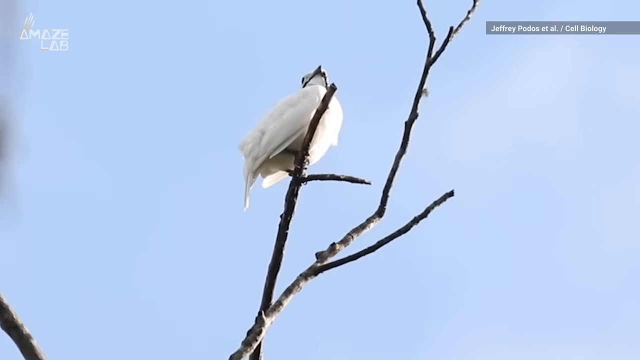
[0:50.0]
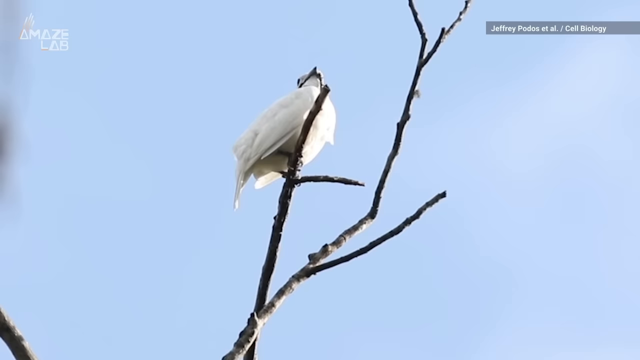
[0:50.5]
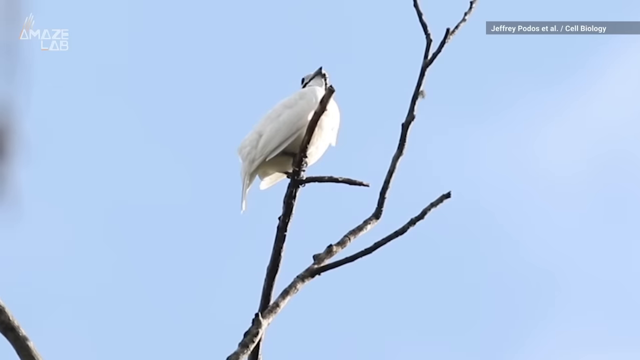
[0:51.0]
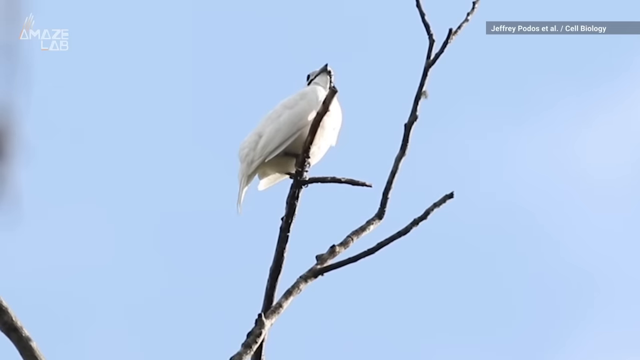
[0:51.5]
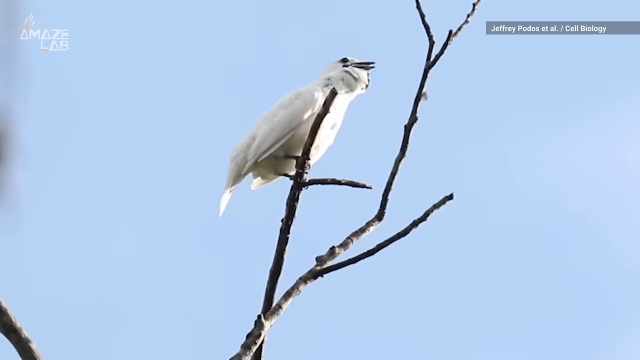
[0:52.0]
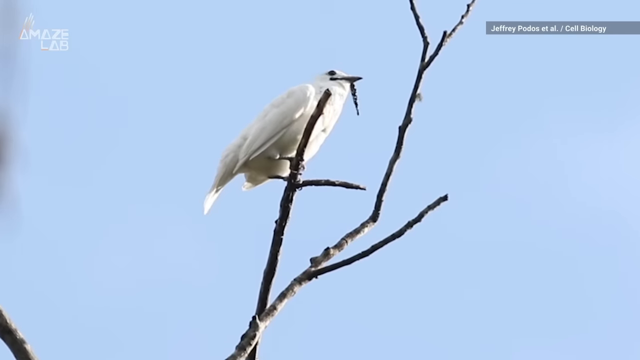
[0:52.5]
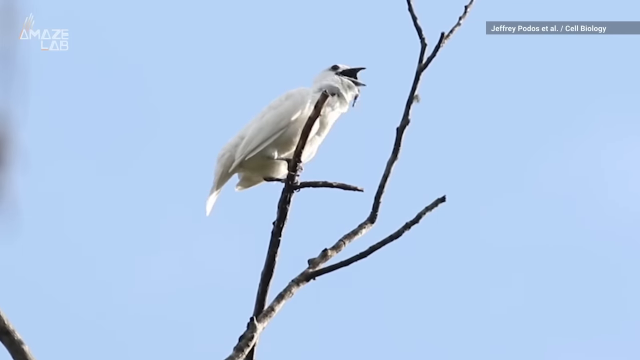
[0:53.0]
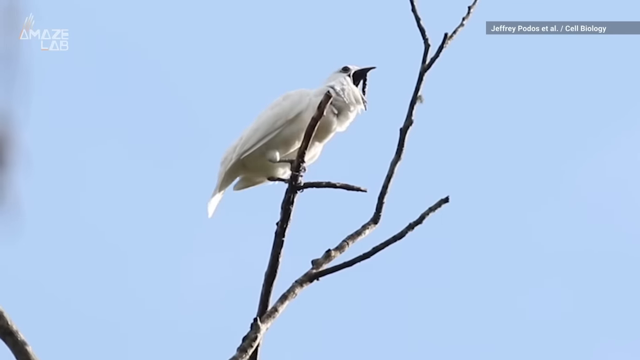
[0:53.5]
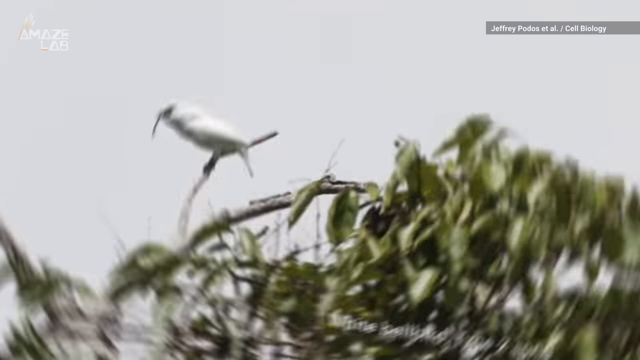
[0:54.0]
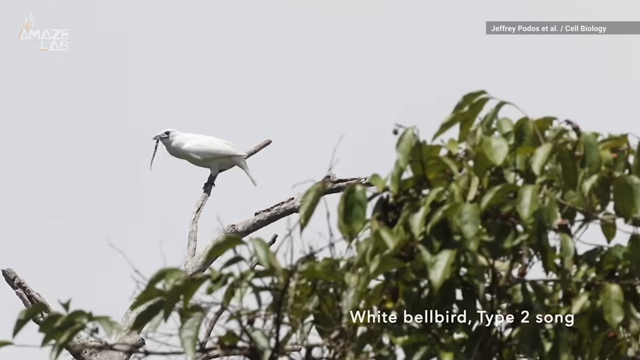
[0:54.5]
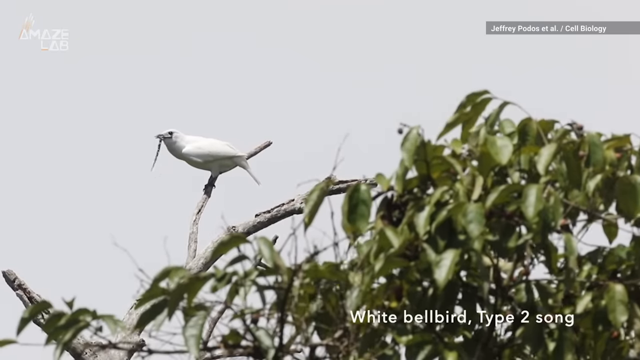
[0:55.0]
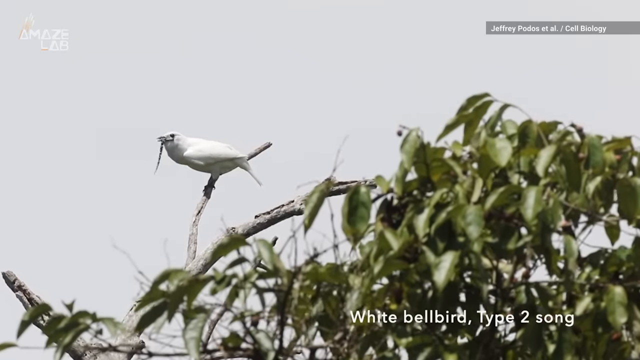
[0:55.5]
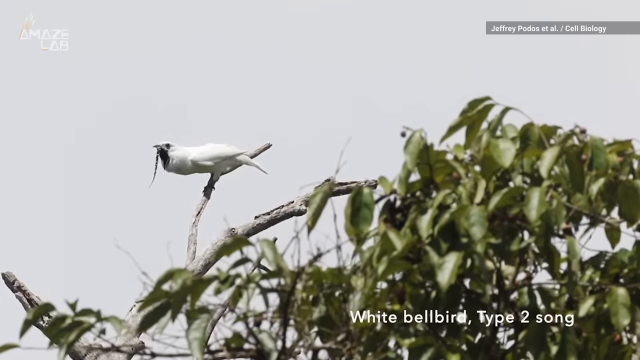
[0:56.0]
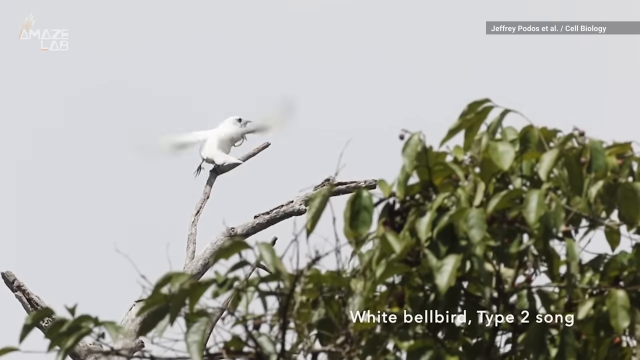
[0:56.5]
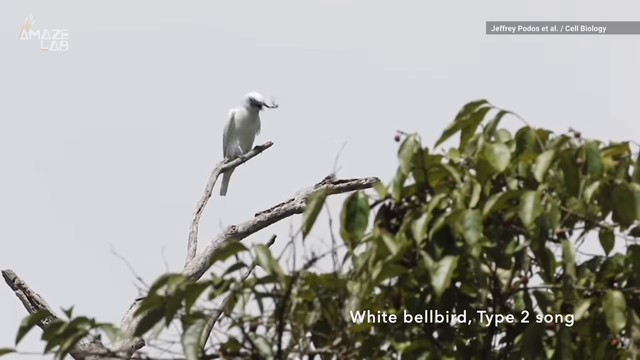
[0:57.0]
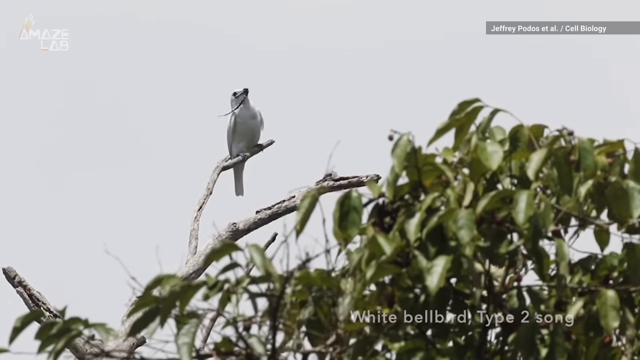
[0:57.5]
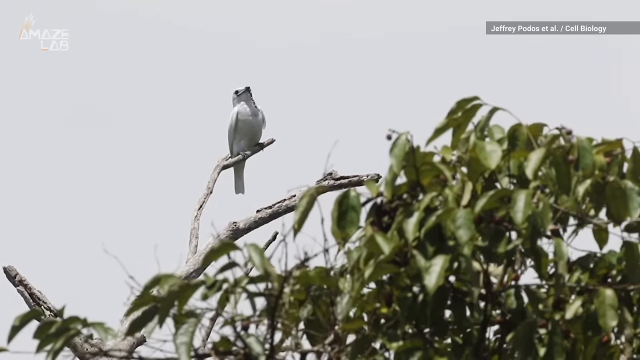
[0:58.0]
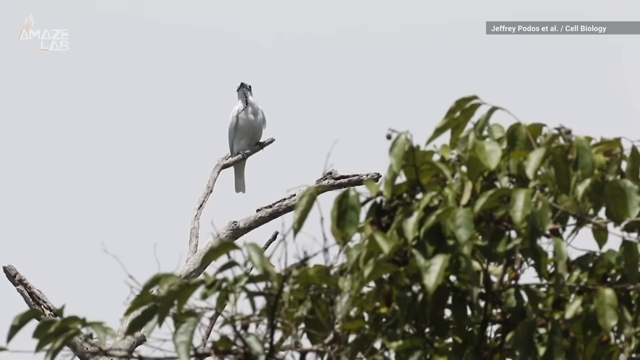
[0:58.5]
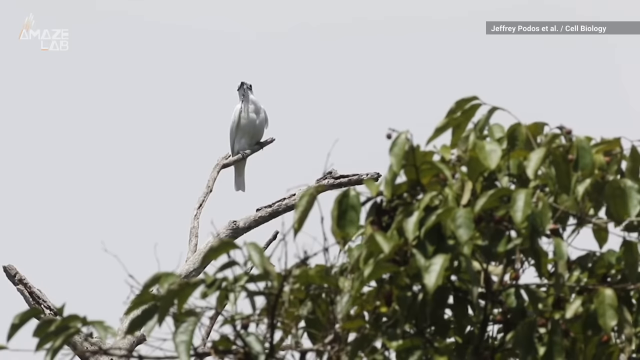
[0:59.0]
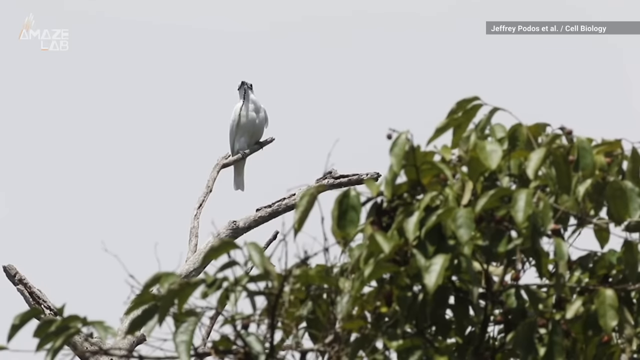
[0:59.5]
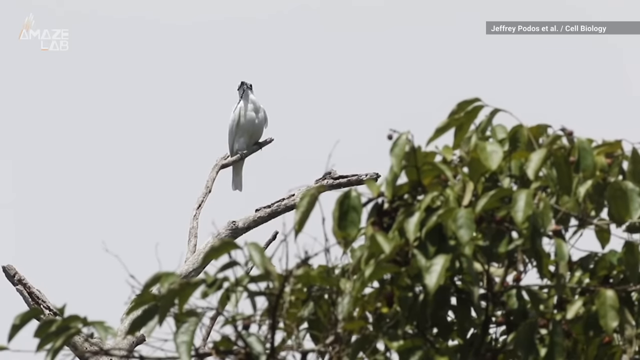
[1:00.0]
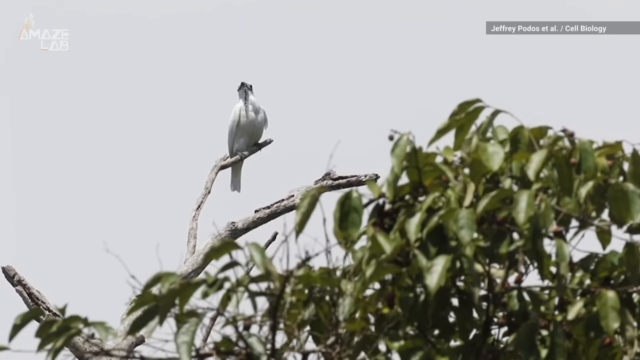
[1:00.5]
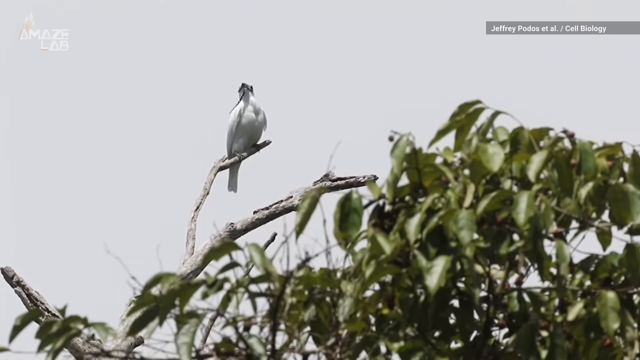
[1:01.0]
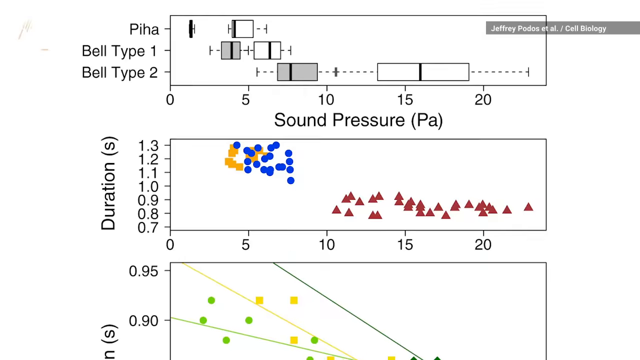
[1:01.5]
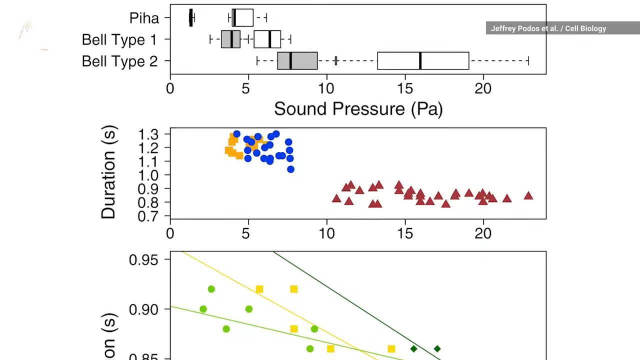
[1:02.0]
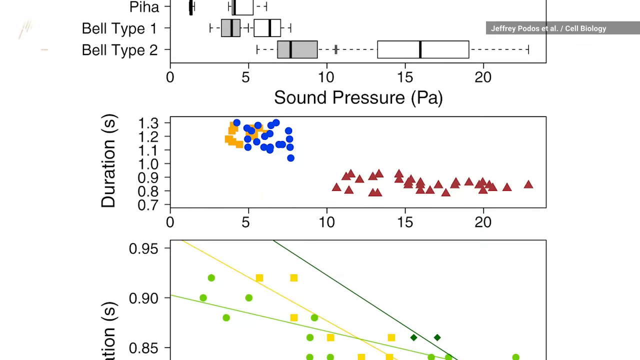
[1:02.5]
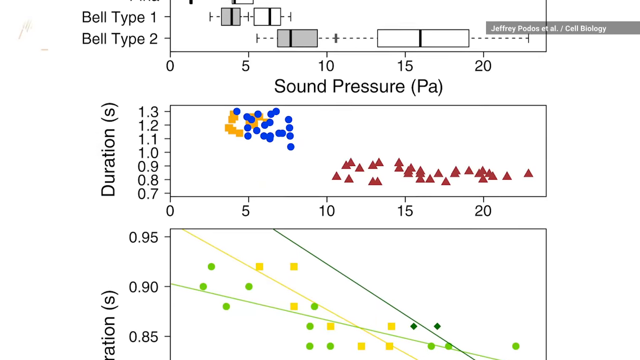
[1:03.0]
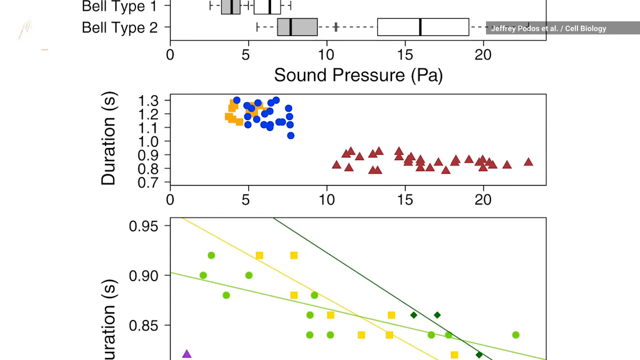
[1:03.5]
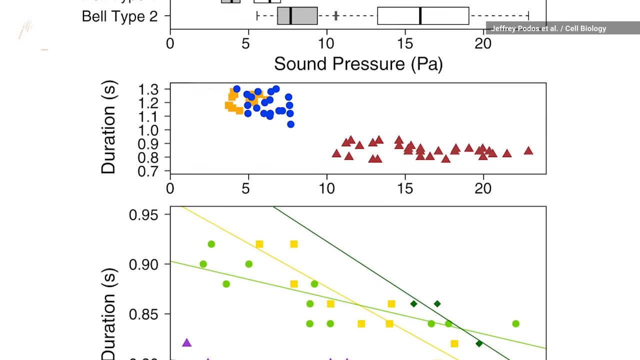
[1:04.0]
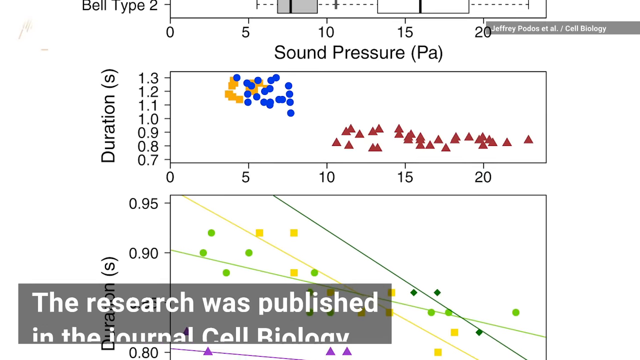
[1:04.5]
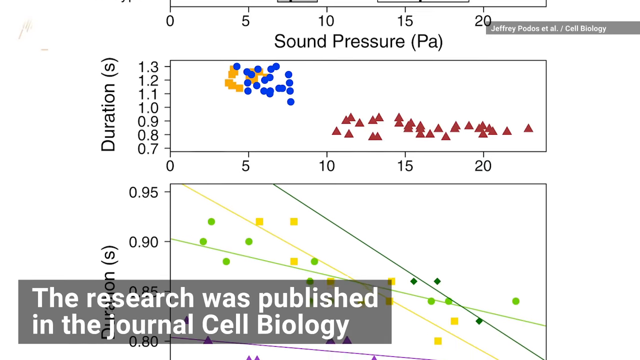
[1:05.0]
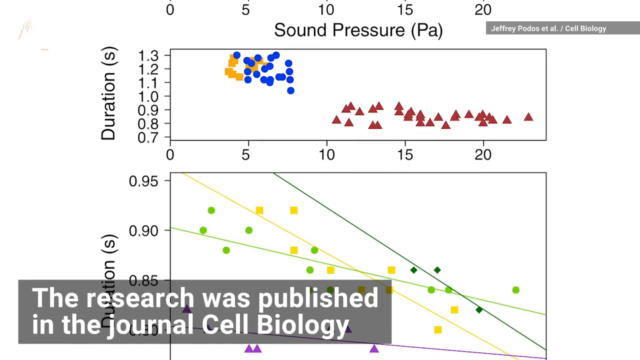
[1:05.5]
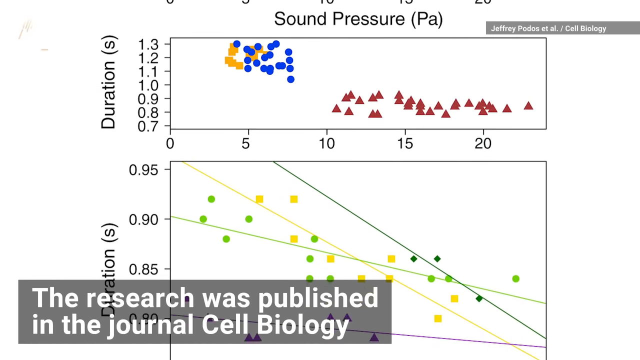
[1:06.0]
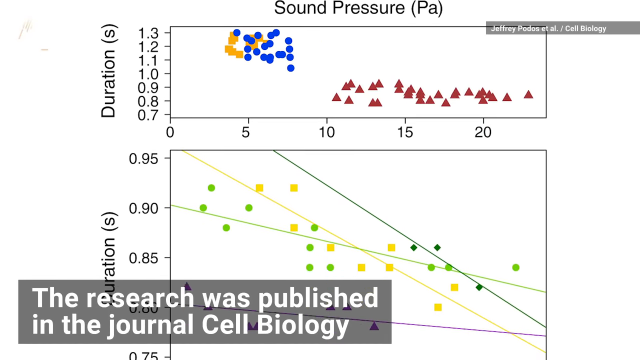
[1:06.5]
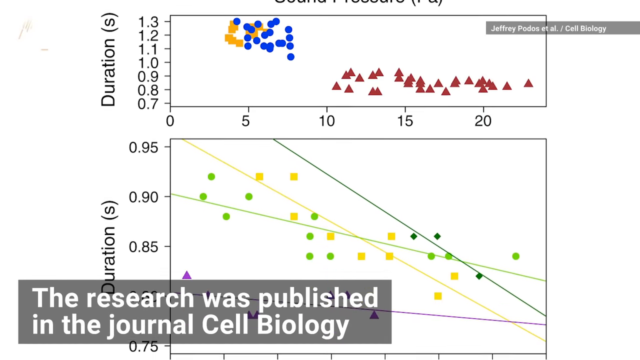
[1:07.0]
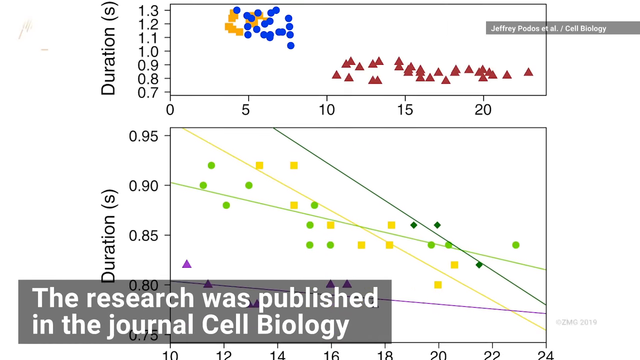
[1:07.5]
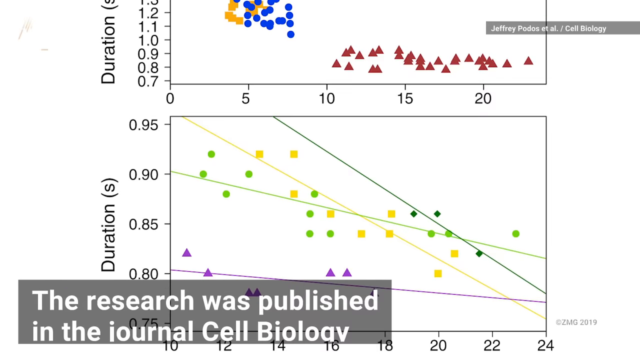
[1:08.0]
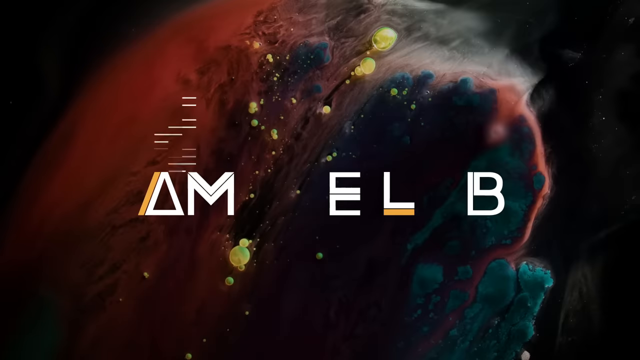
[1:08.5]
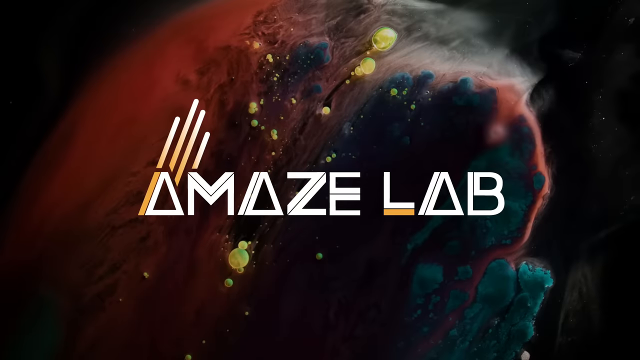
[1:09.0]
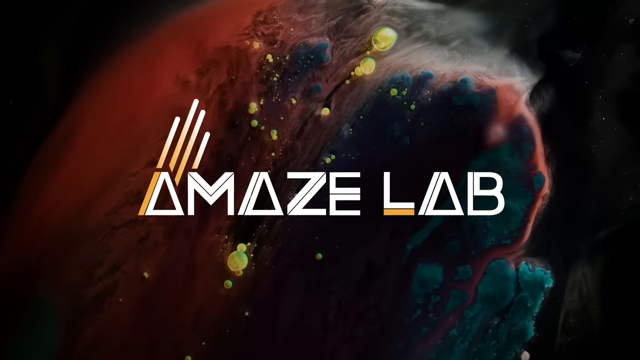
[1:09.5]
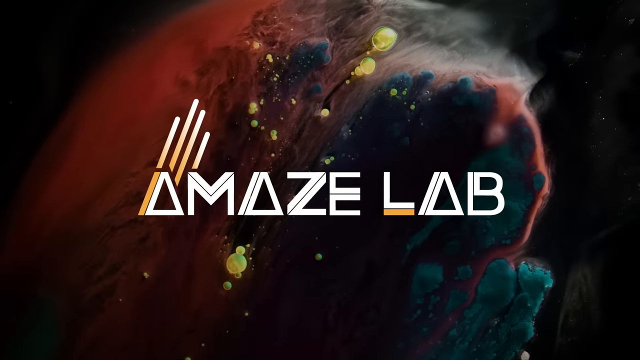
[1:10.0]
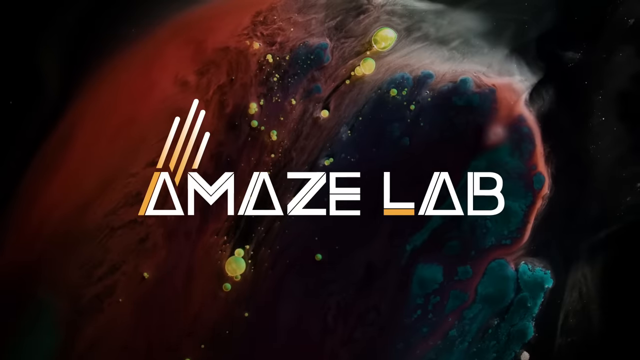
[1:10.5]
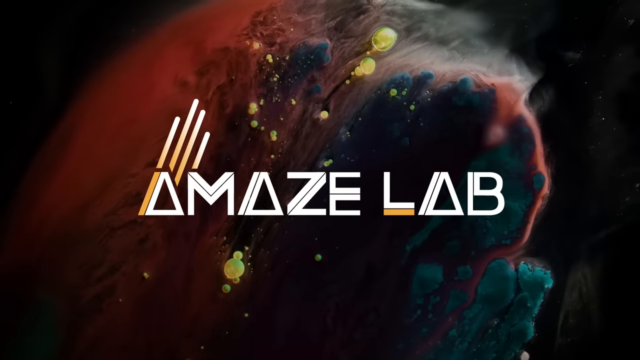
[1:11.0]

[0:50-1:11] An undershot shows a bird sitting on a branch. The branch separates into three different paths, and the bird is sitting on the left one. The branch is brown, and the background is a light blue sky with no clouds in sight. The bird is fully white, with a darker beak and darker eyes. At the top right is the name of the person who apparently took the shot, Jeffrey Podos. The video stays focused on the bird, which looks to the right and opens its mouth very wide, presumably making the loud call. The scene changes to a different bird of the same type, looking to the left and standing on a branch, with a lot of green leaves at the bottom right of the frame. The bird keeps opening its mouth, presumably making loud noises. The scene changes to a sort of graph with numbers and charts, apparently showing how loud the bird is over its duration. At the bottom left, text reads "the research was published in the journal Cell Biology." The video ends with the Amaze Lab name.